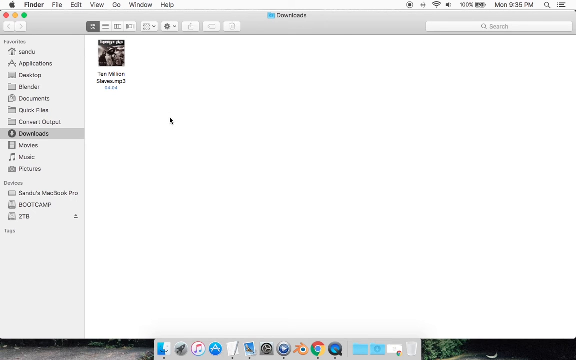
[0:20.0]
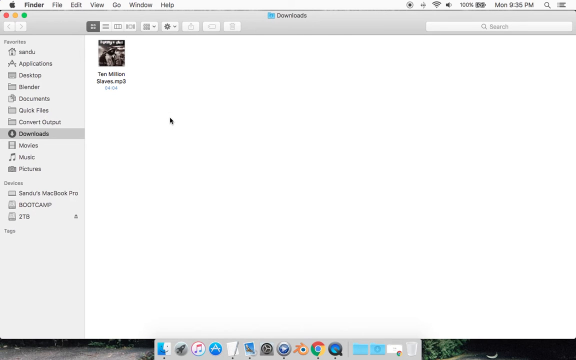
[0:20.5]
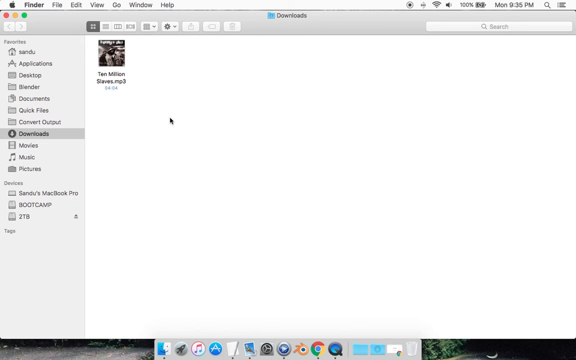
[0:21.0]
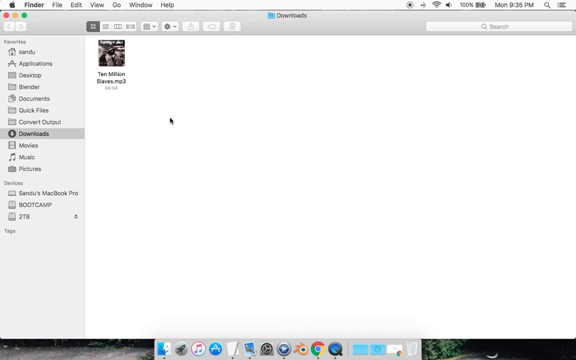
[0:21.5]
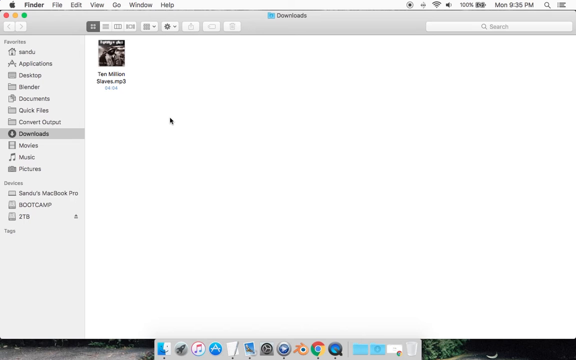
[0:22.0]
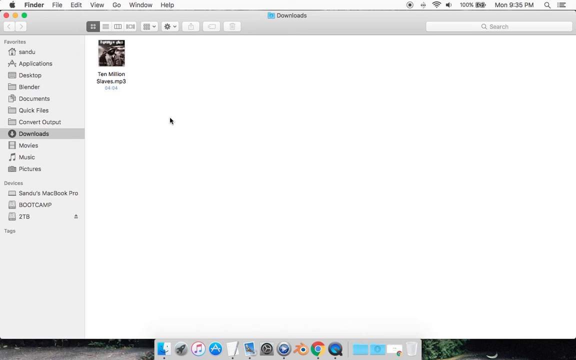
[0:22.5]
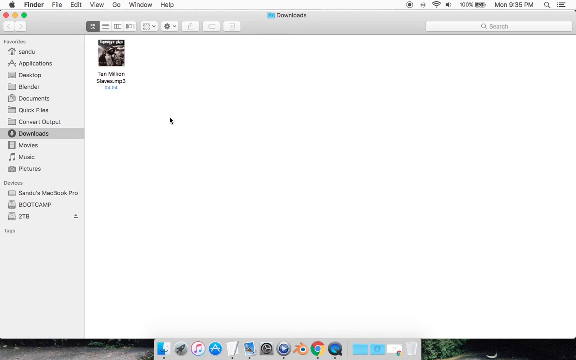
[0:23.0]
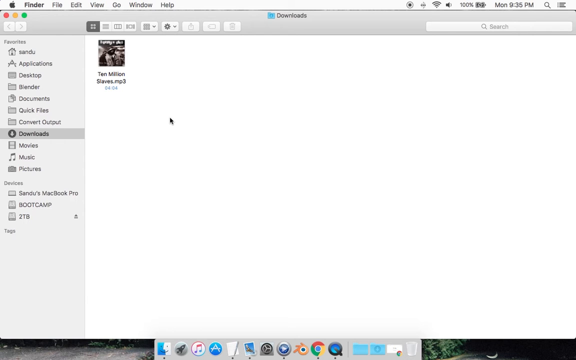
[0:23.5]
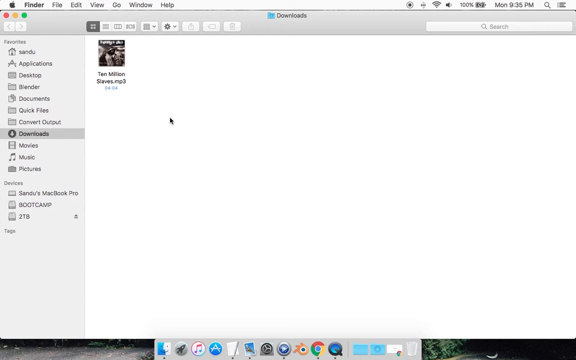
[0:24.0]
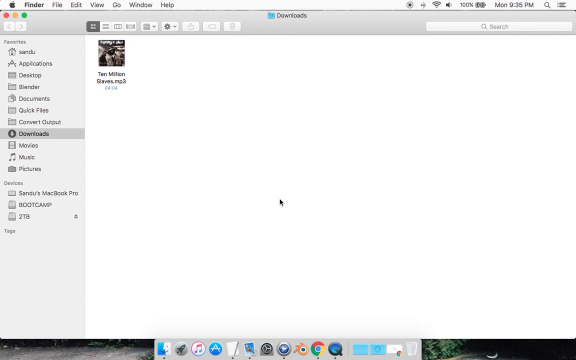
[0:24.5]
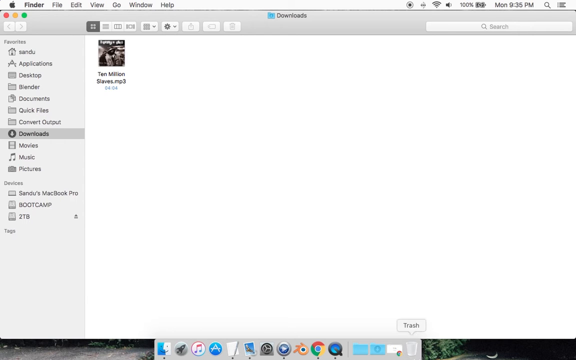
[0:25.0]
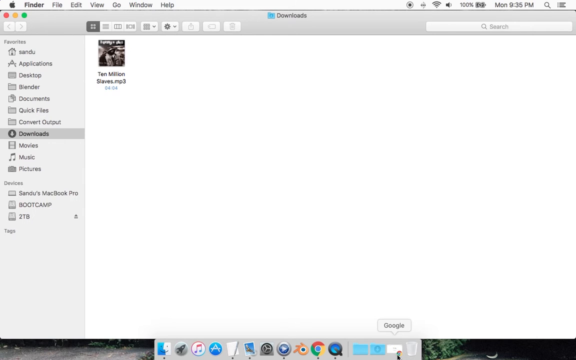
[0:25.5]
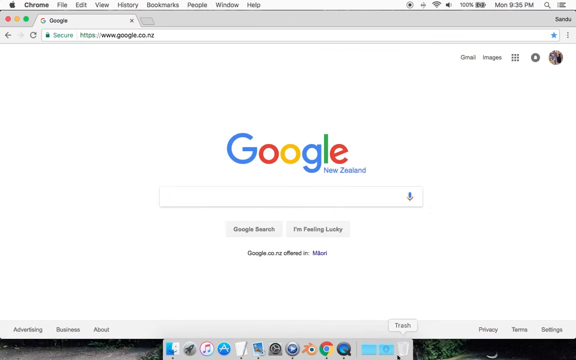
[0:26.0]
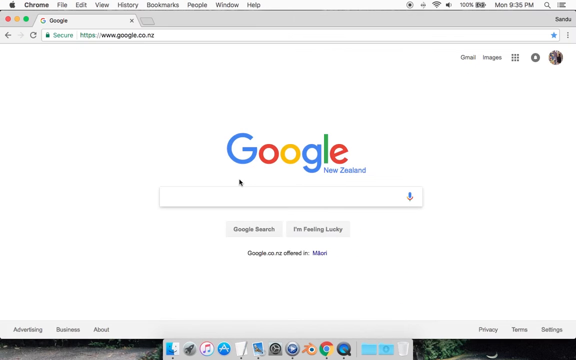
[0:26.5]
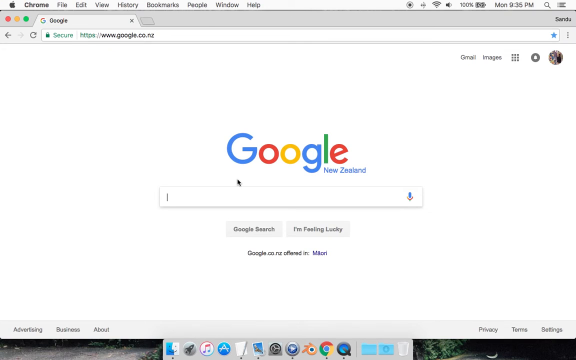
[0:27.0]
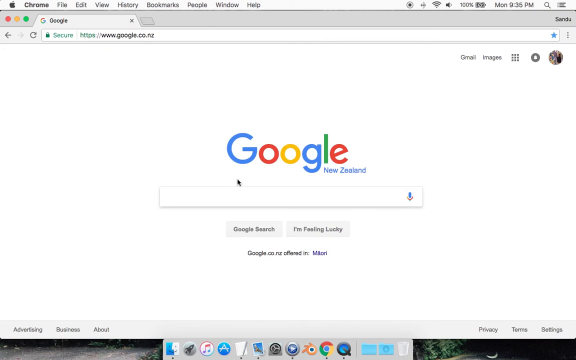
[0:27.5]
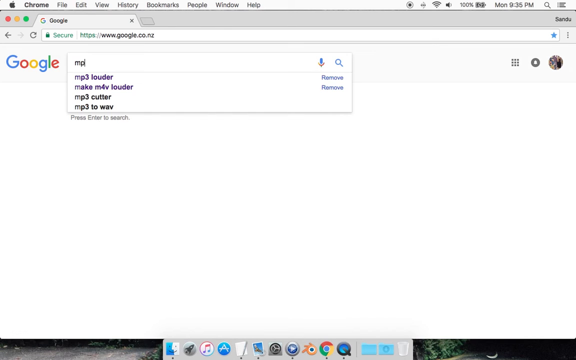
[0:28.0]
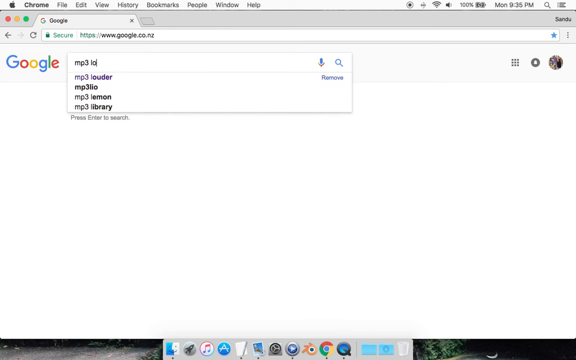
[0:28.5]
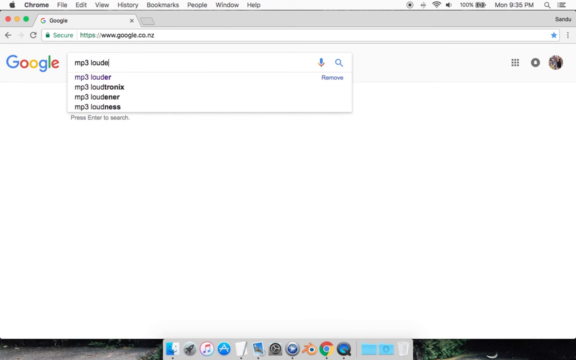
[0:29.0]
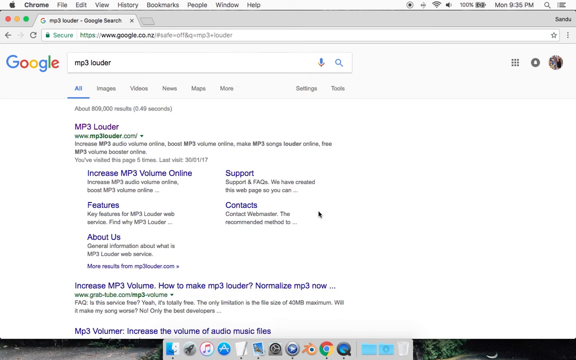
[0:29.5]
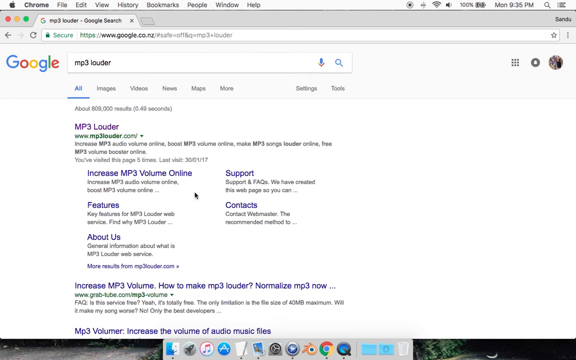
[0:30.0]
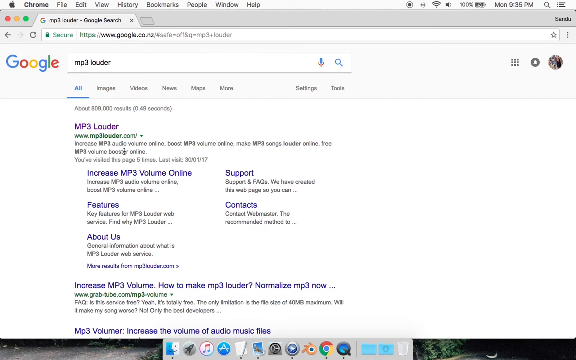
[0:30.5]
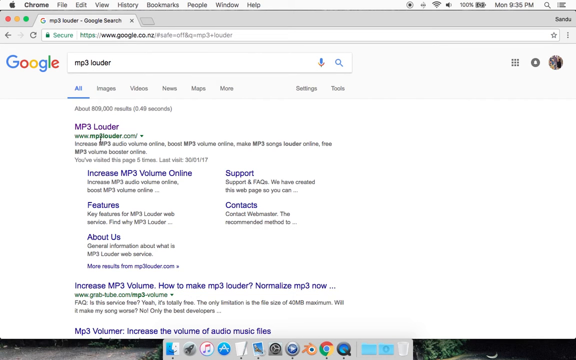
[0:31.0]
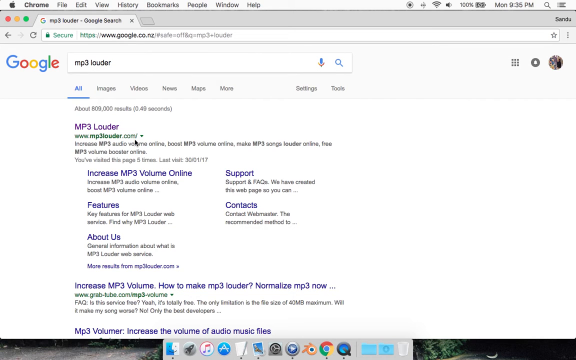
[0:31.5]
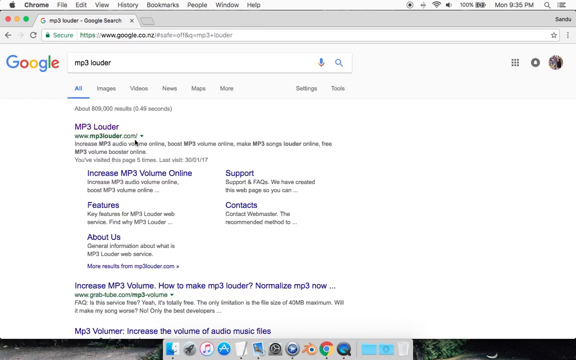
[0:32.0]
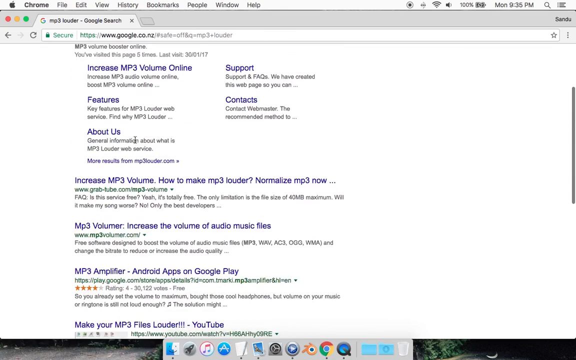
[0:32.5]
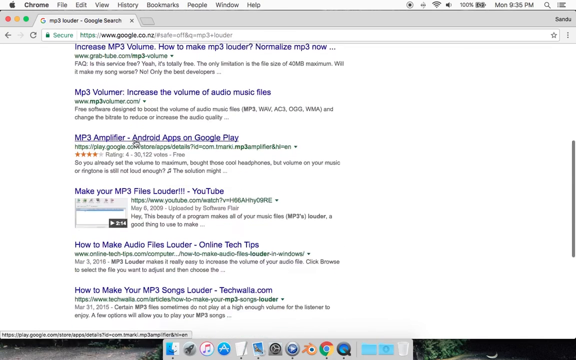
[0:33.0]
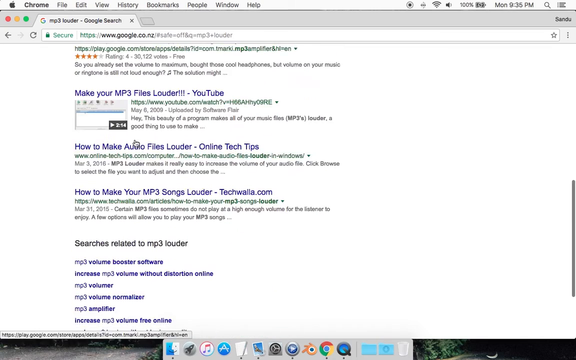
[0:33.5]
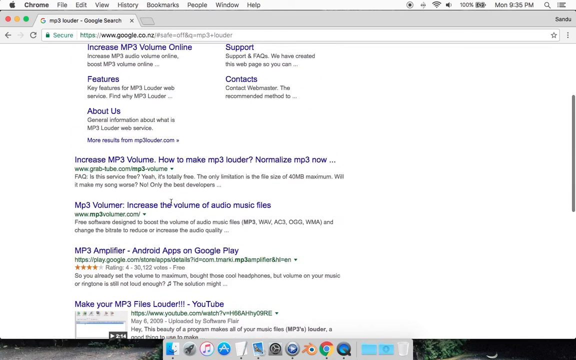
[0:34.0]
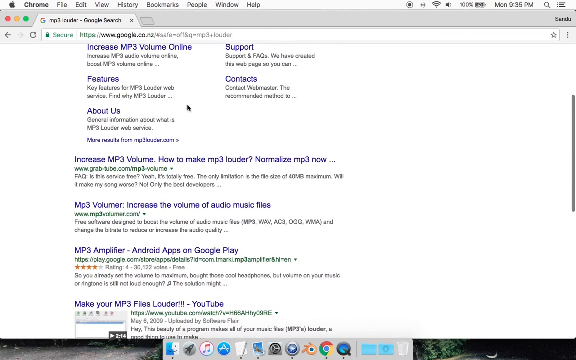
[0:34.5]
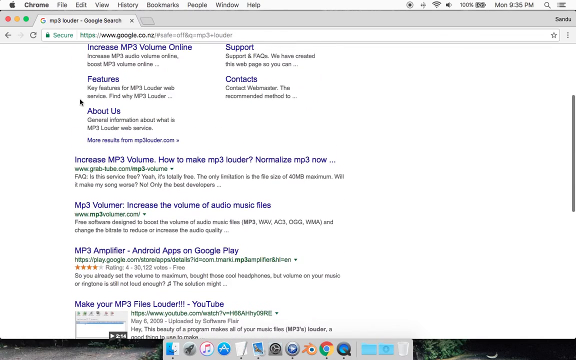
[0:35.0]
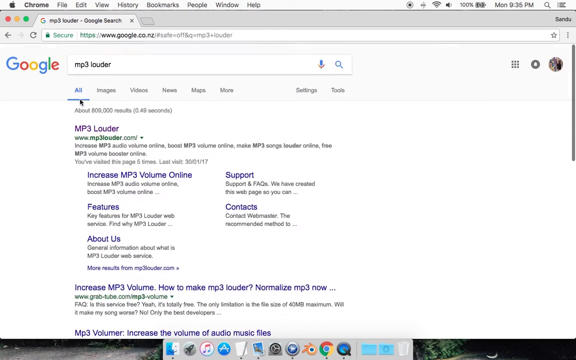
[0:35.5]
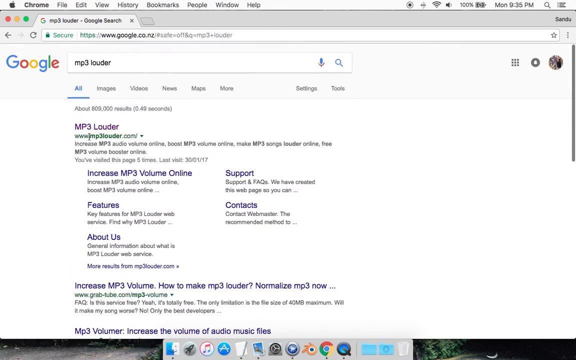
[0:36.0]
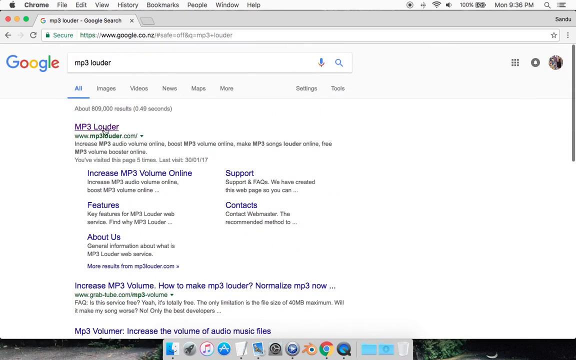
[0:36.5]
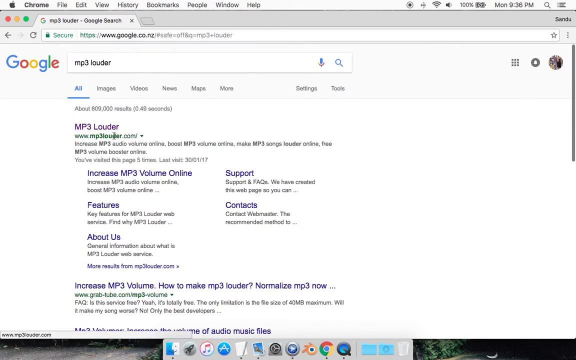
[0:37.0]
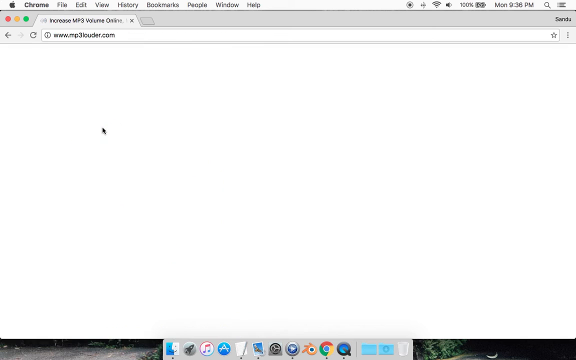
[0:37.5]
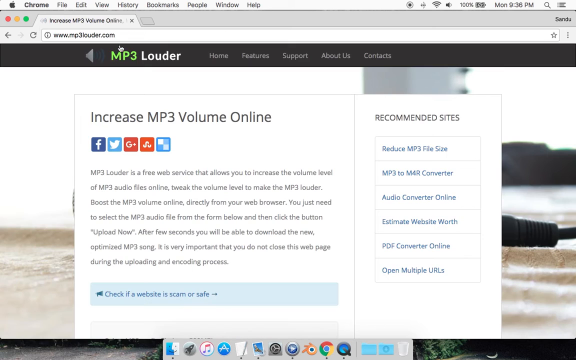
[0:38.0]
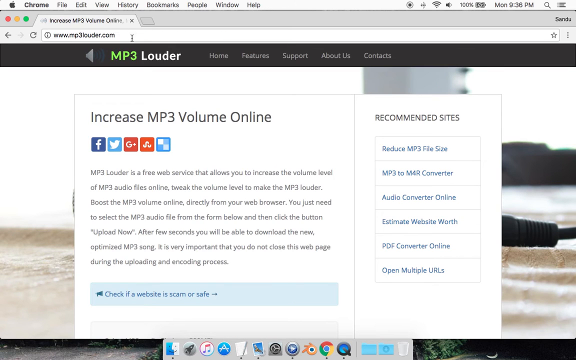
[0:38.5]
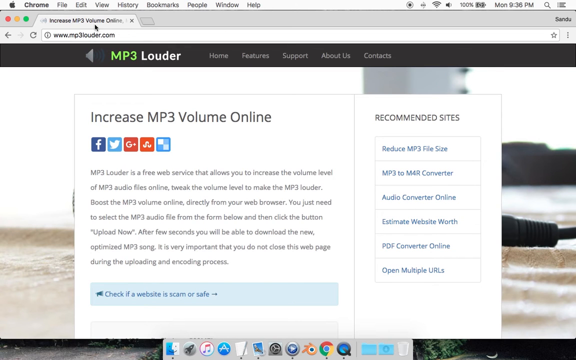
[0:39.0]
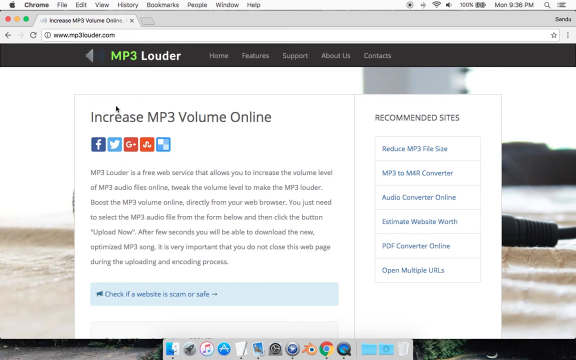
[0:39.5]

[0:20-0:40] The downloads folder is open, showing one mp3 file titled "10 million slaves" with a duration of 4 minutes and 4 seconds. The user goes down to the bottom systems tray menu and clicks the Google item furthest to the right. This opens a Google browser, where the user types "mp3louder", and the first result is the website mp3louder.com. The user scrolls down the search page and back up, then clicks the mp3louder.com search result link. The mp3louder website opens; its home page has a heading that says "increase mp3 volume online", beneath it a row of social media share icons, and beneath that a short description of what Mp3 Louder is and how to set it up.